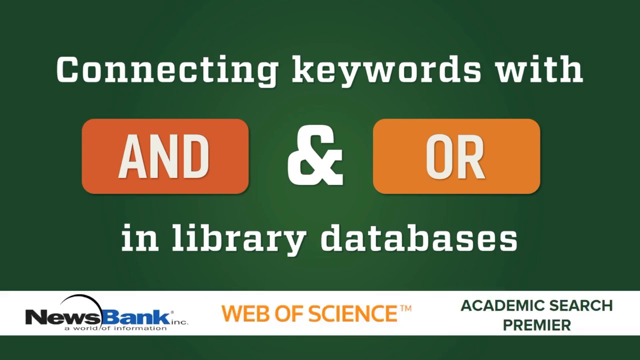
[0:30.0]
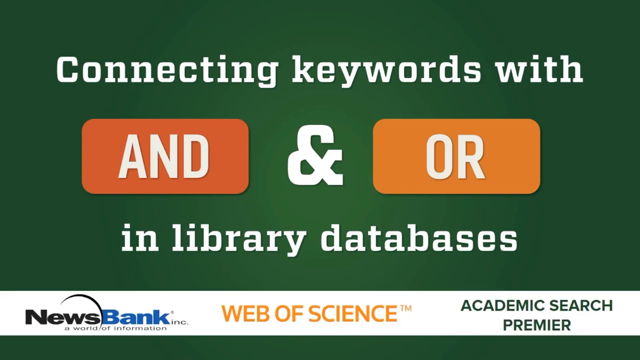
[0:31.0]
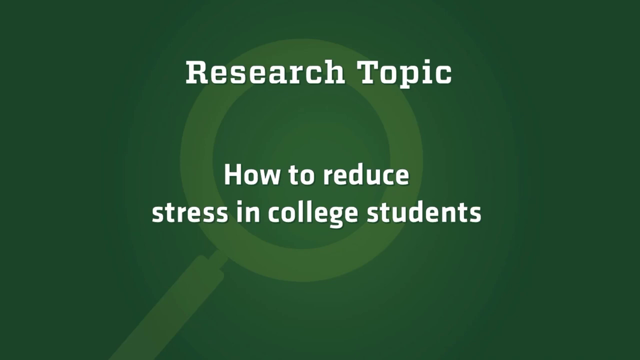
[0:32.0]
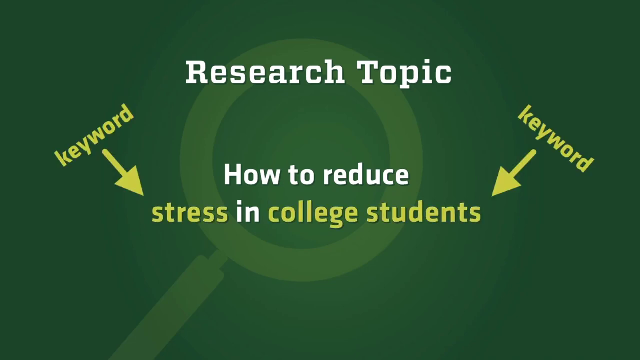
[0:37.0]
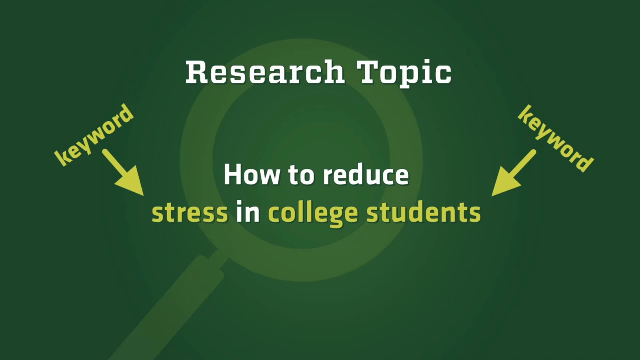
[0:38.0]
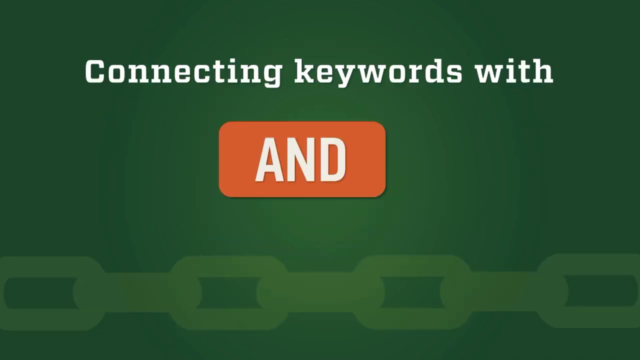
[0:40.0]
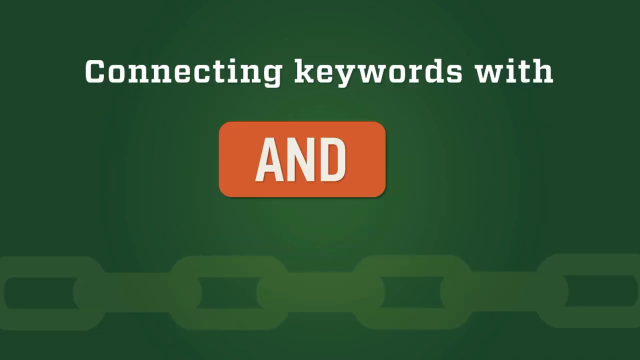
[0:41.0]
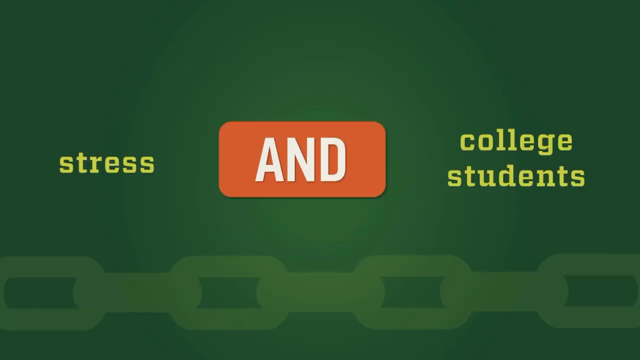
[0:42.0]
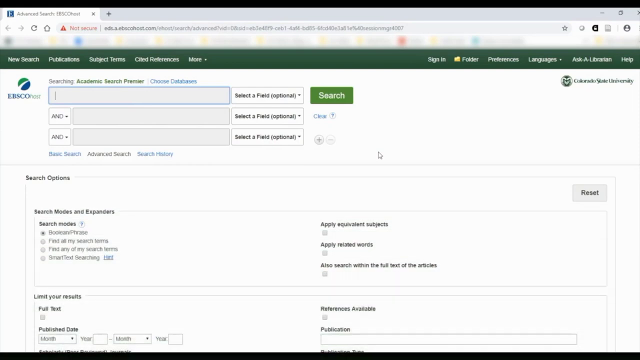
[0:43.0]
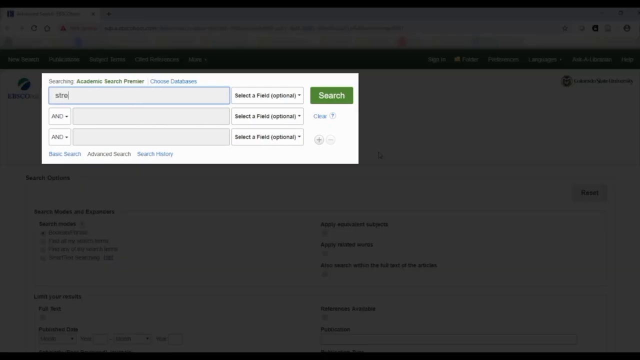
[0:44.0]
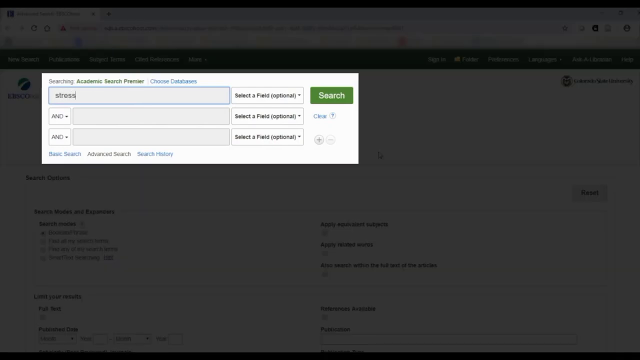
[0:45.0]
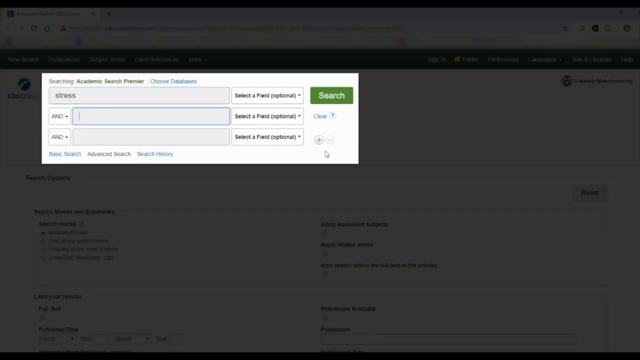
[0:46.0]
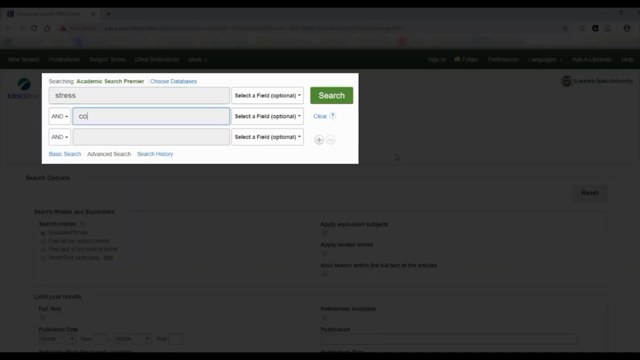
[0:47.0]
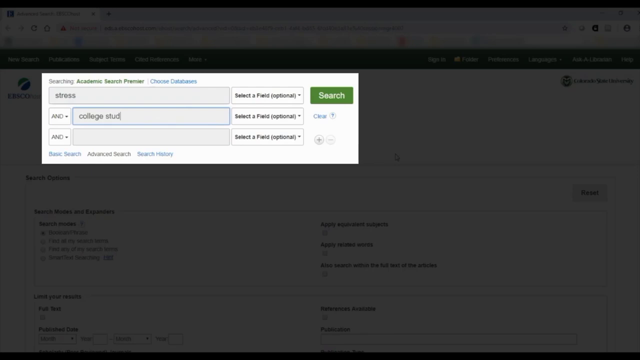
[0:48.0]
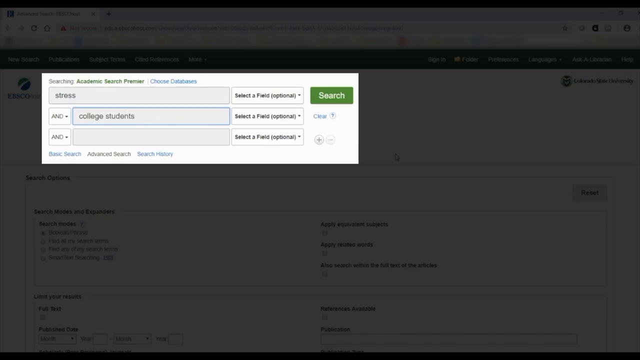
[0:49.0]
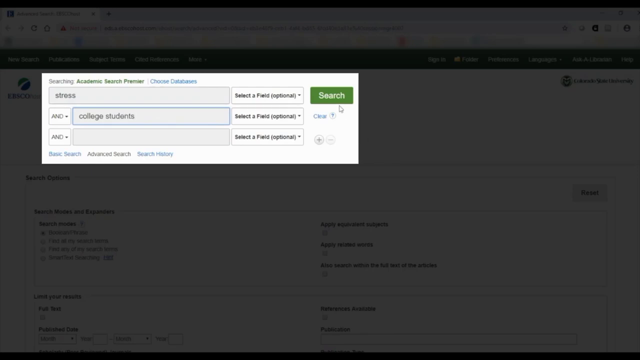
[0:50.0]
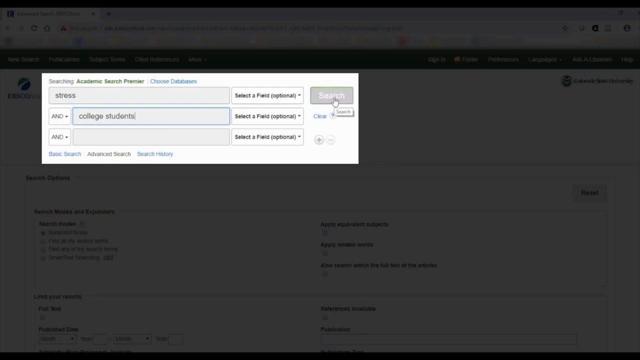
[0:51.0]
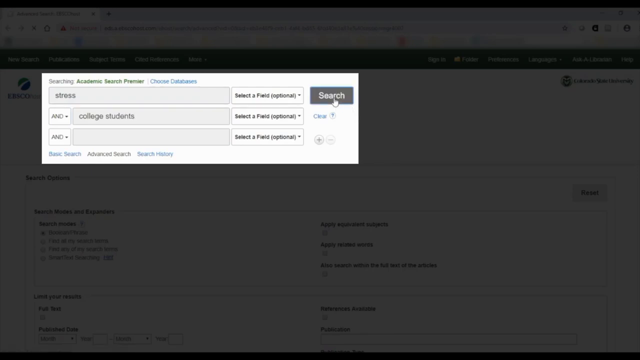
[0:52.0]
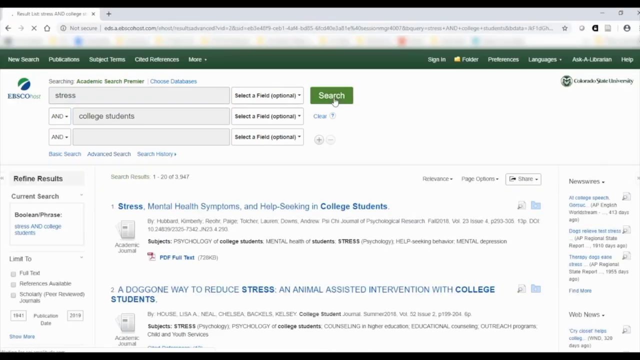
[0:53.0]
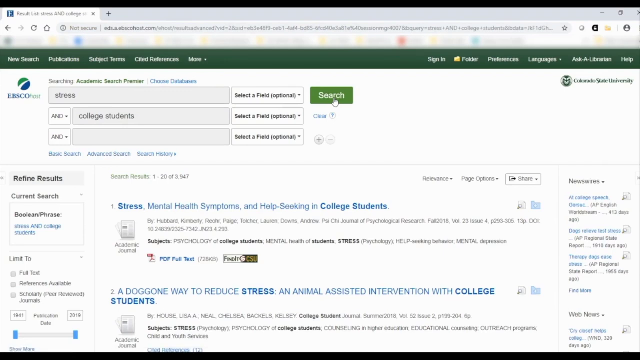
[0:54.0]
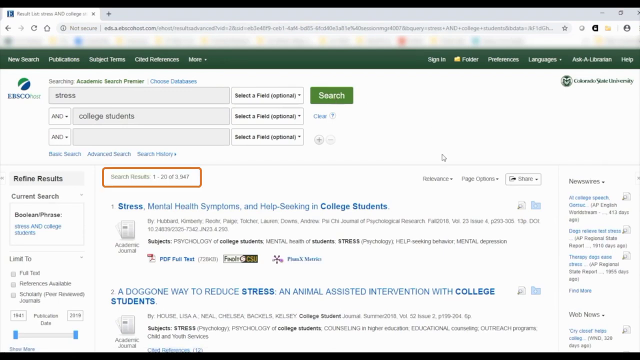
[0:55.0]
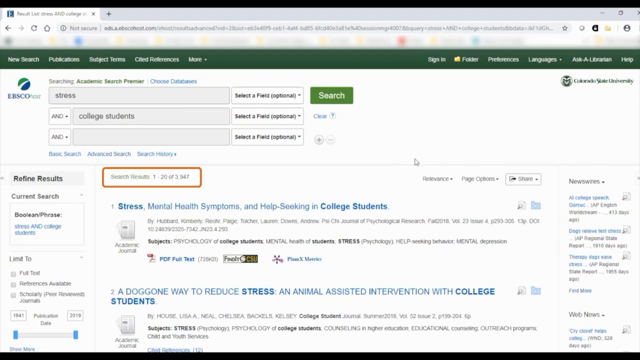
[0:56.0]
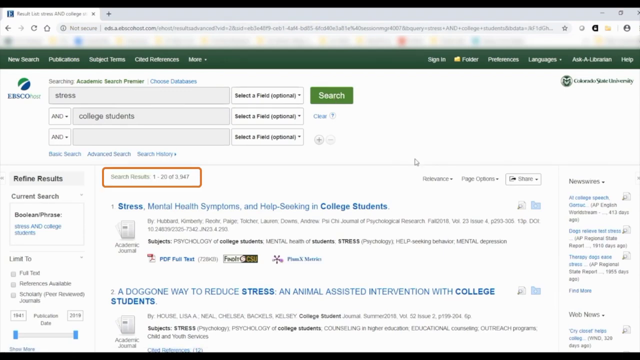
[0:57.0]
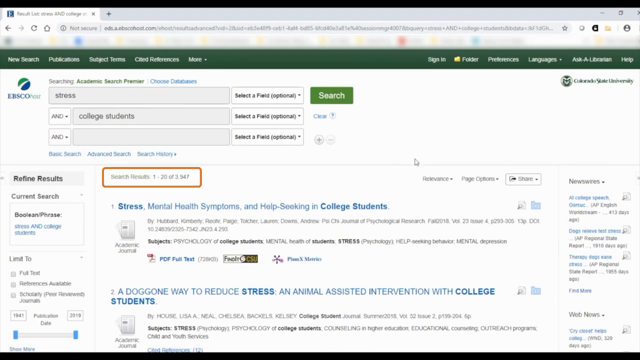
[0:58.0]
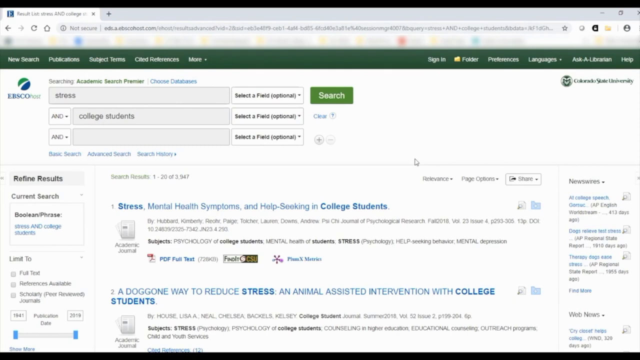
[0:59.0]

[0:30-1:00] A green screen has a white rectangle across the whole bottom of it. In that white box, "NewsBank" is on the left side, "Web of Science" in orange is in the center, and "Academic Search Premier" is on the right. On the green screen, white words read "connecting keywords" with a large and sign in the middle and "in library databases" under that. Orange boxes are on both sides of the large and sign: the box on the left is darker and contains a white capital "AND", while the lighter box on the right contains a white capital "OR". A subject comes up, "research topic" and "how to reduce stress in college", with a magnifying glass in the back and two arrows pointing toward the words. "Keyword" appears, then "connecting keywords" and the "and" button in its orange setting. The video moves to another page where a little box comes up, something begins to type, and the search box is clicked. Another screen then appears with blue and gray writing, and a red highlight comes around one of the search boxes.